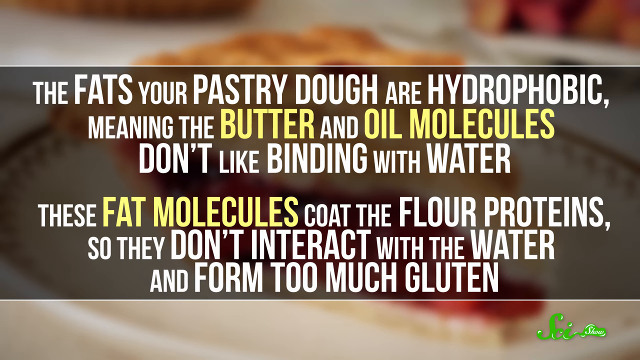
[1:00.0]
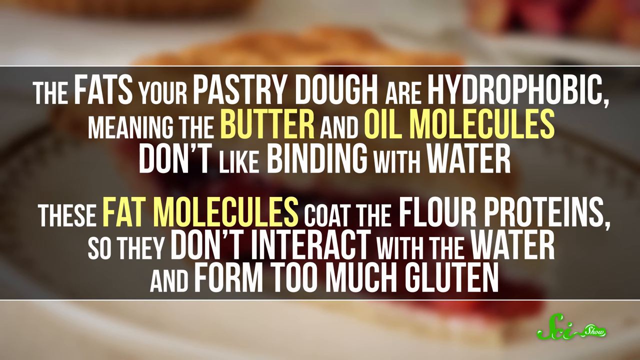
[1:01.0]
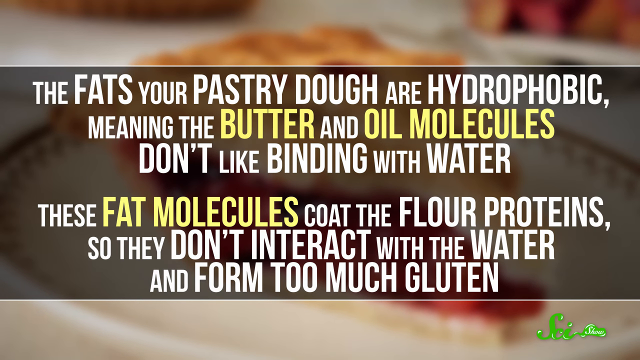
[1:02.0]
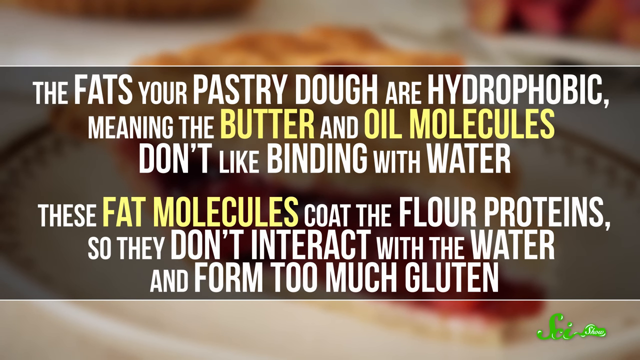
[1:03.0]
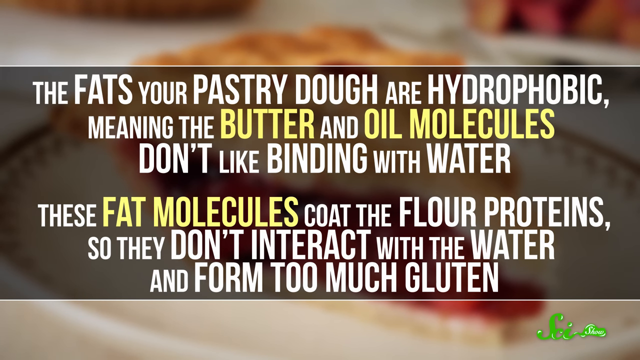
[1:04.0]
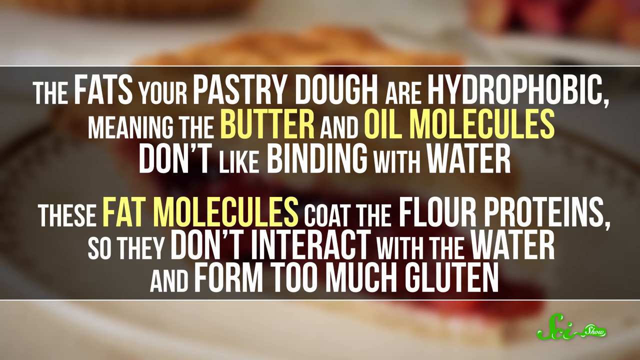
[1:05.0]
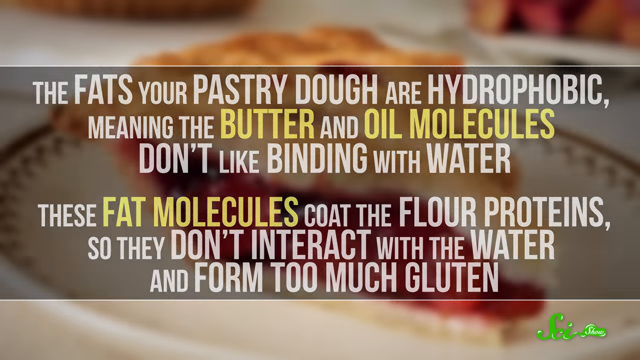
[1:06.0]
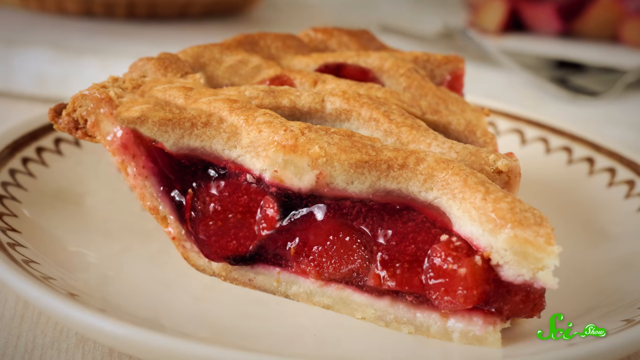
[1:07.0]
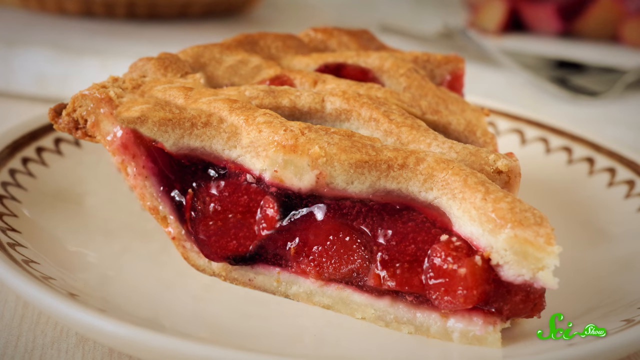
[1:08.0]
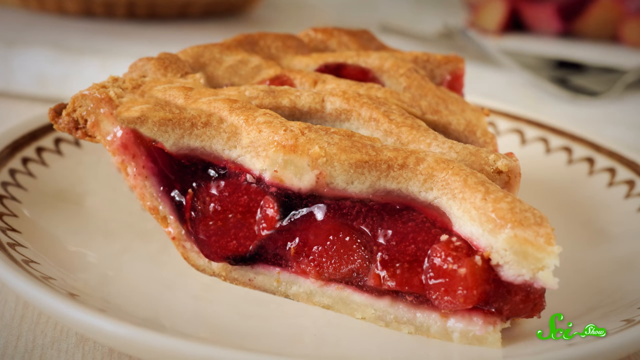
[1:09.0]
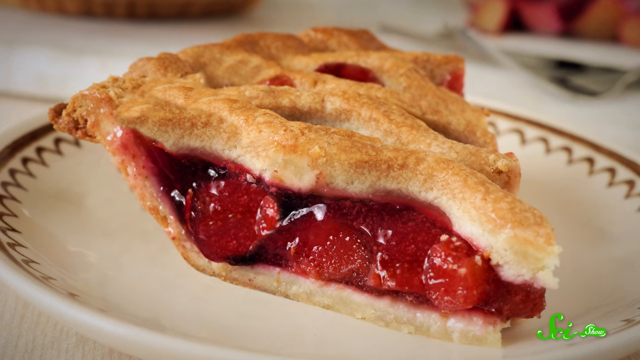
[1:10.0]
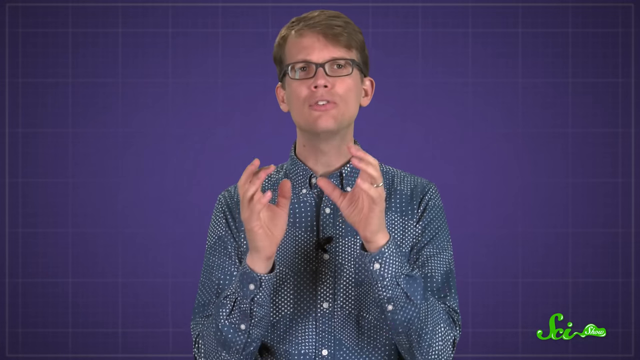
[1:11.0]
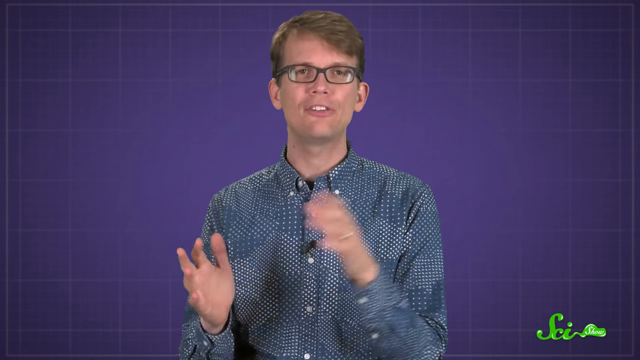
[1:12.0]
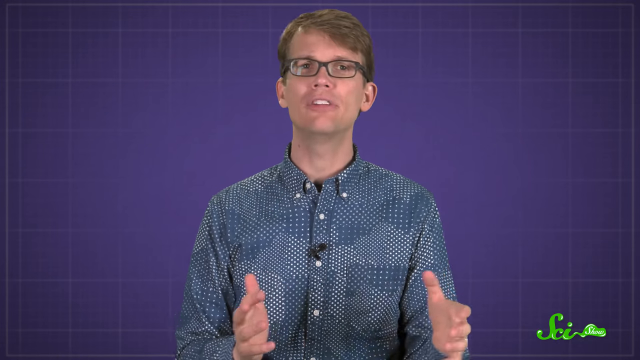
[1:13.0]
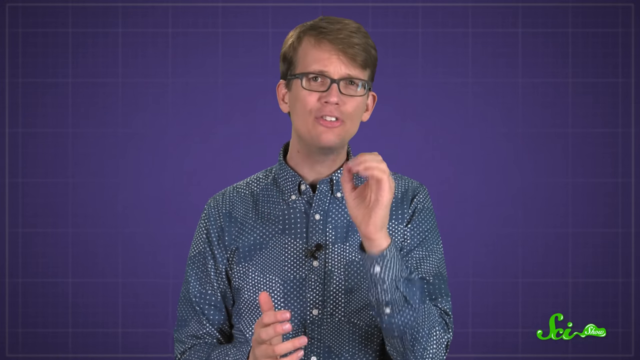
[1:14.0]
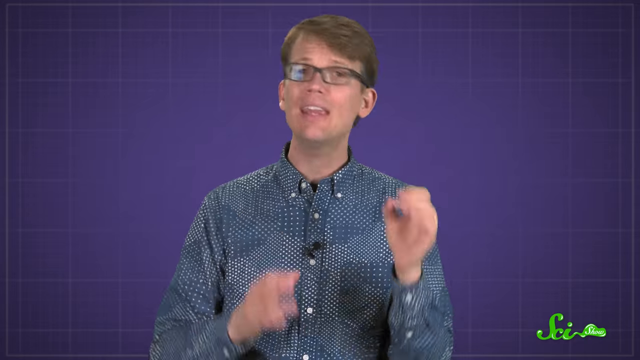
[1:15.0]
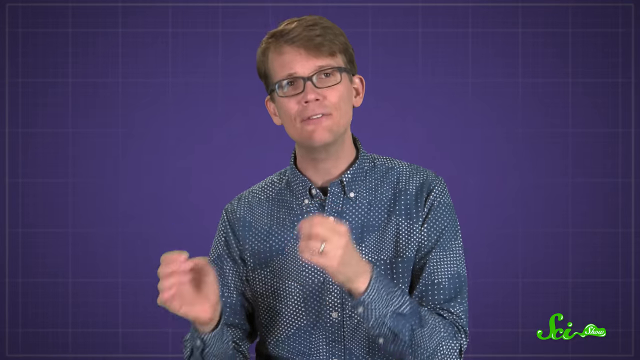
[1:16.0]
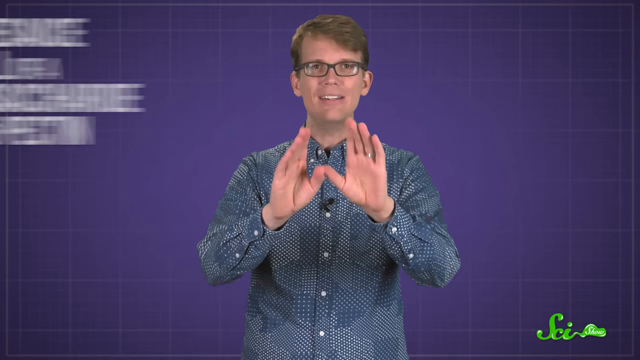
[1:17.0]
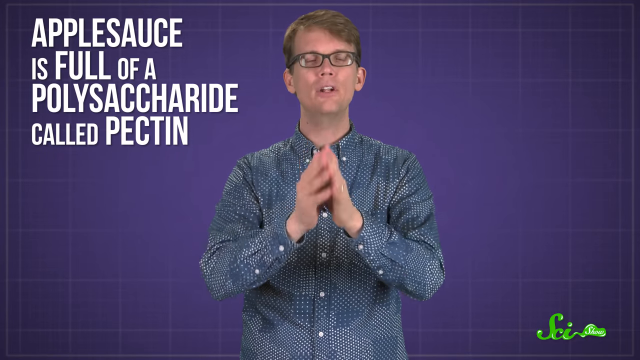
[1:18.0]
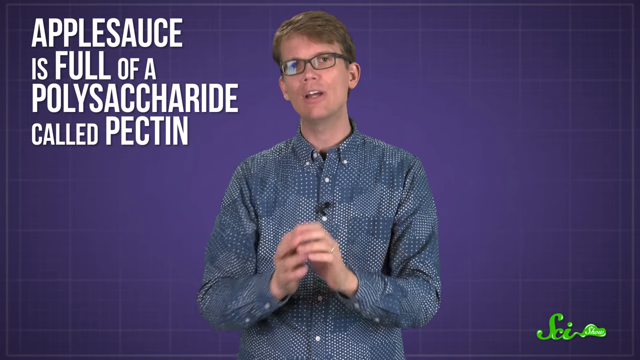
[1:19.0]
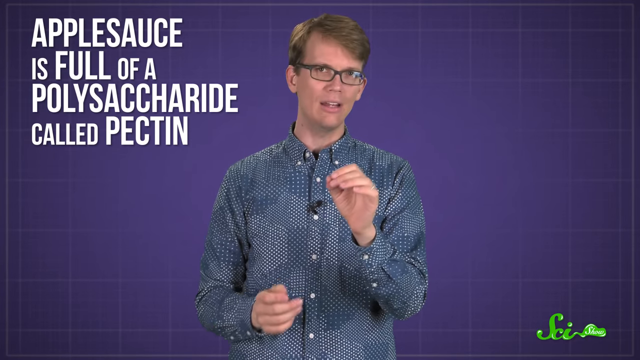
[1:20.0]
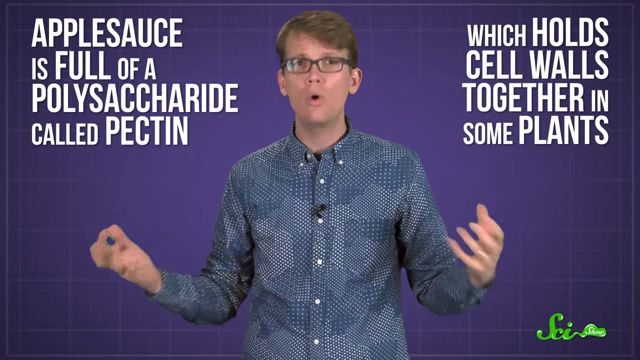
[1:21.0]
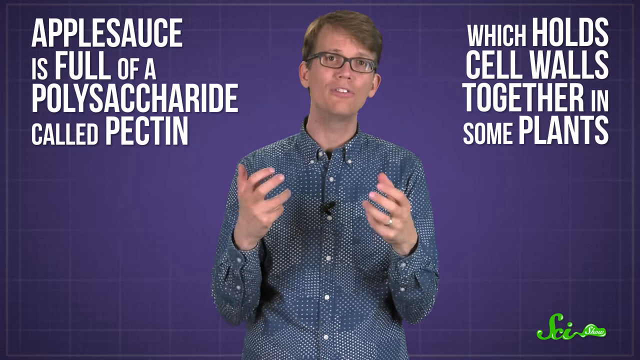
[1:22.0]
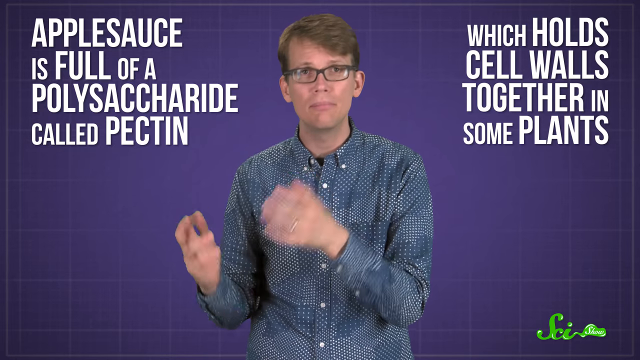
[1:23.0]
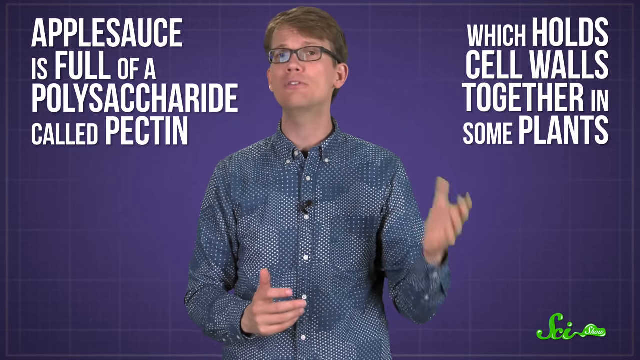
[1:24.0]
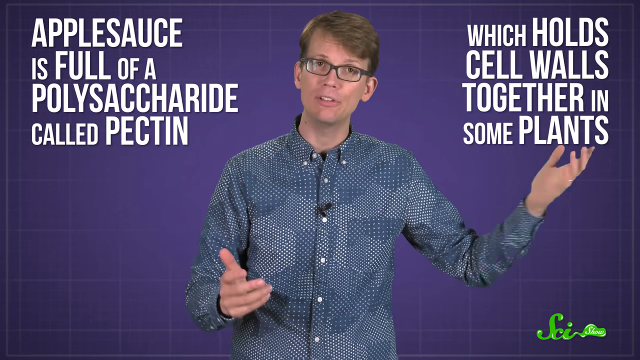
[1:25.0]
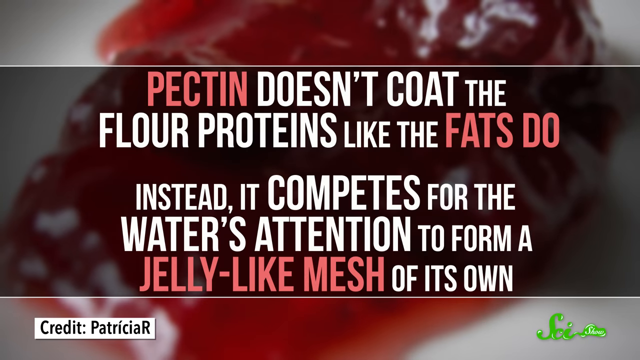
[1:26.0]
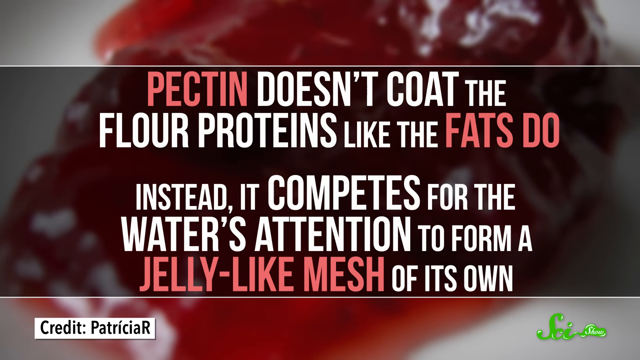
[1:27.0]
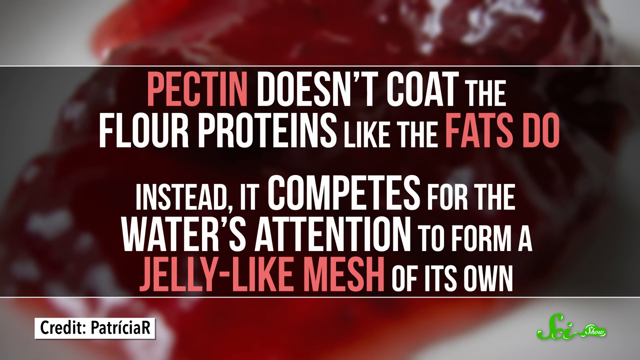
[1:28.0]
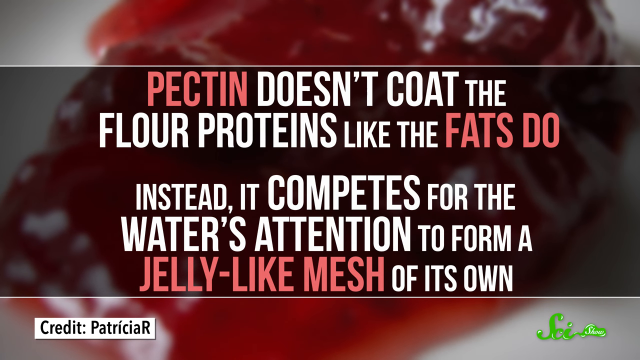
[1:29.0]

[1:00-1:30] A picture shows a triangle-cut piece of pie that looks like it may be cherry. Text superimposed on top reads "the fats your pastry dough are hydrophobic, meaning the butter and oil molecules don't like binding with water. These fat molecules coat the flour proteins so they don't interact with the water and form too much gluten." The pie, apparently cherry, is shown. The man then talks in front of a blue background, wearing a teal shirt. Text reads "applesauce is full of a polysaccharide called pectin, and which holds cell walls together in some plants. Pectin doesn't coat the flour proteins like the fats do. Instead, it competes for the water's attention to form a jelly-like mesh of its own."